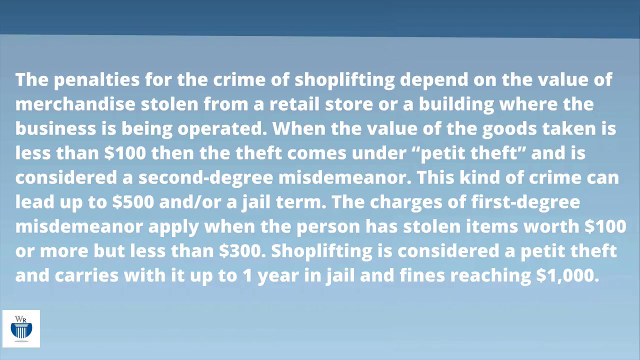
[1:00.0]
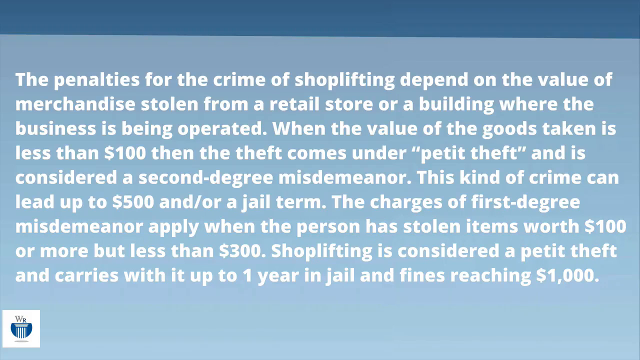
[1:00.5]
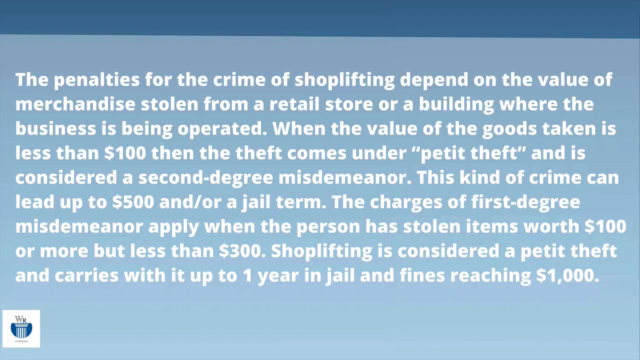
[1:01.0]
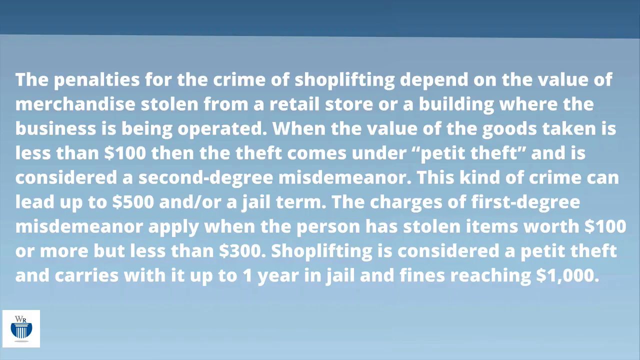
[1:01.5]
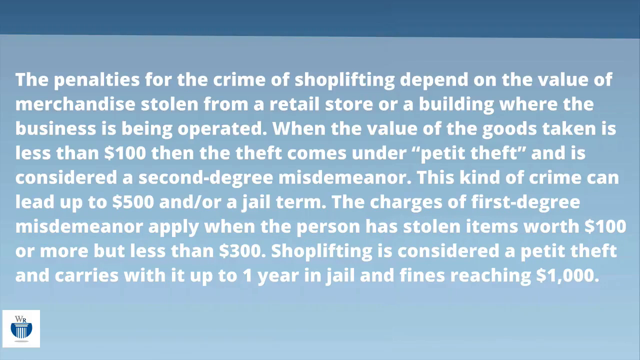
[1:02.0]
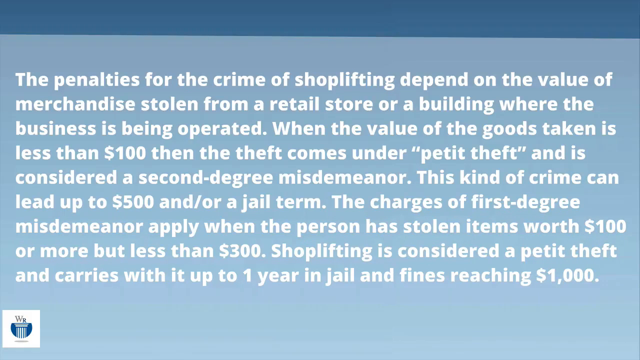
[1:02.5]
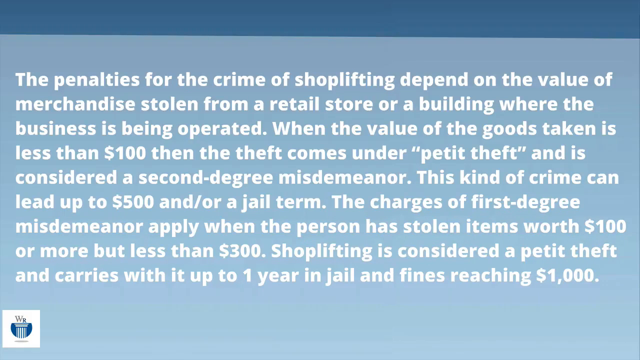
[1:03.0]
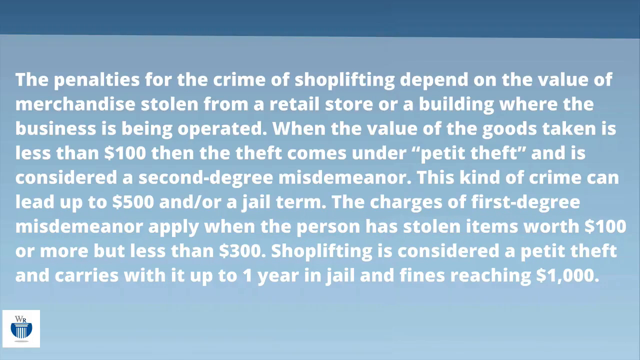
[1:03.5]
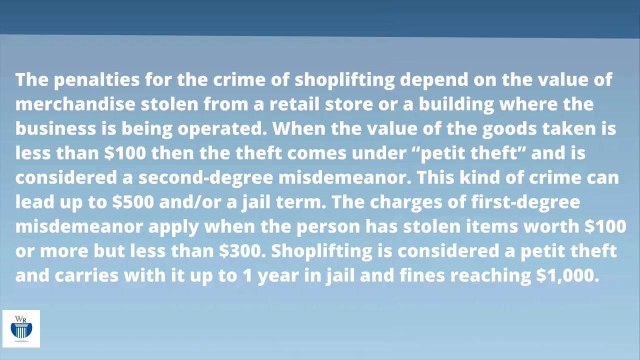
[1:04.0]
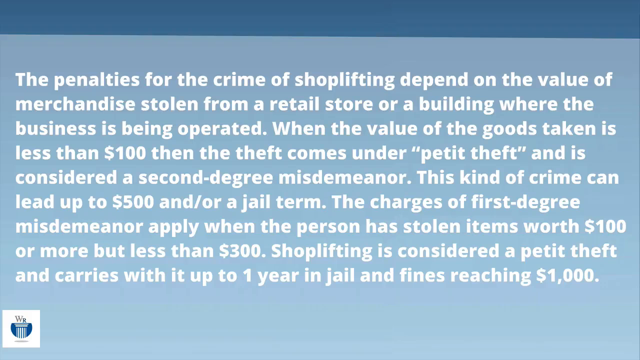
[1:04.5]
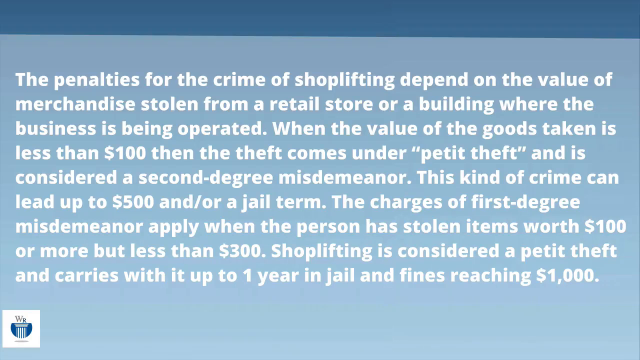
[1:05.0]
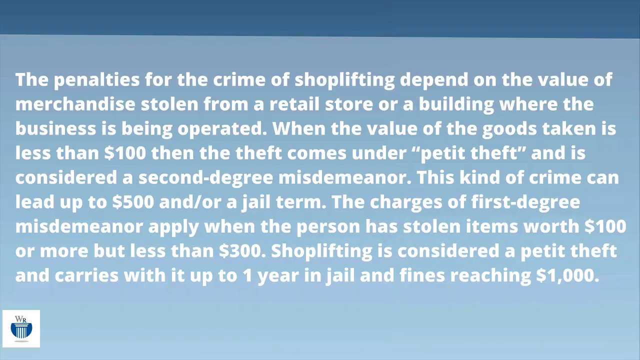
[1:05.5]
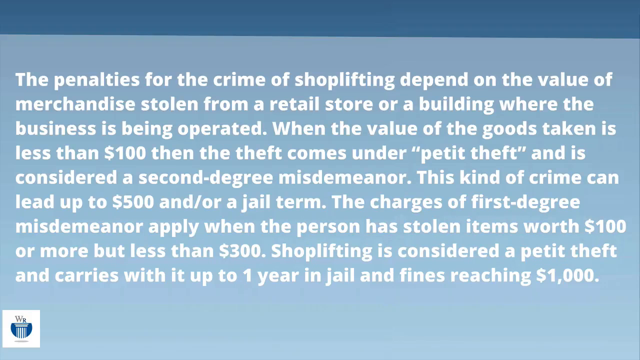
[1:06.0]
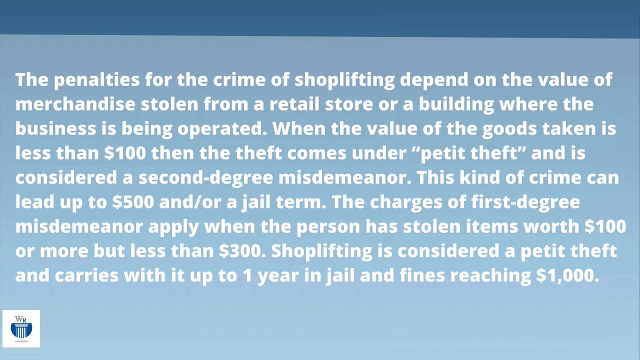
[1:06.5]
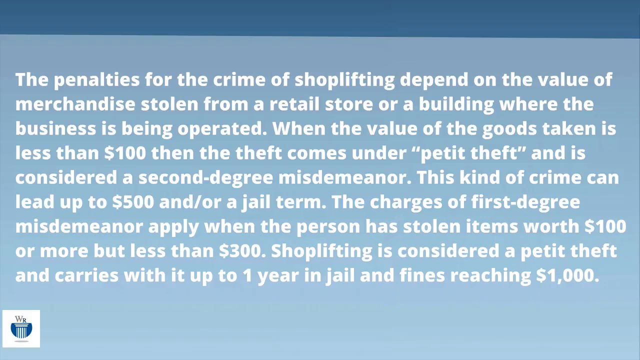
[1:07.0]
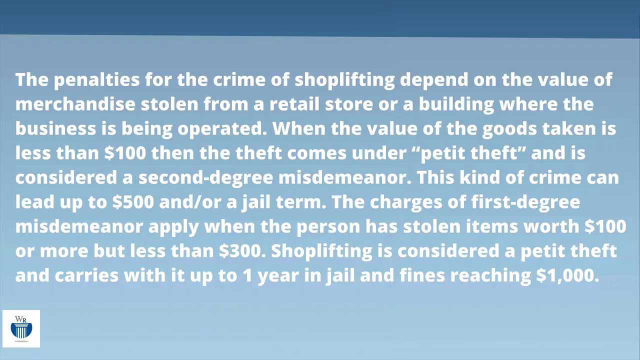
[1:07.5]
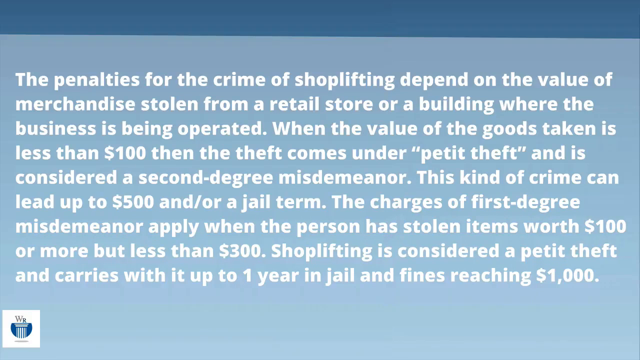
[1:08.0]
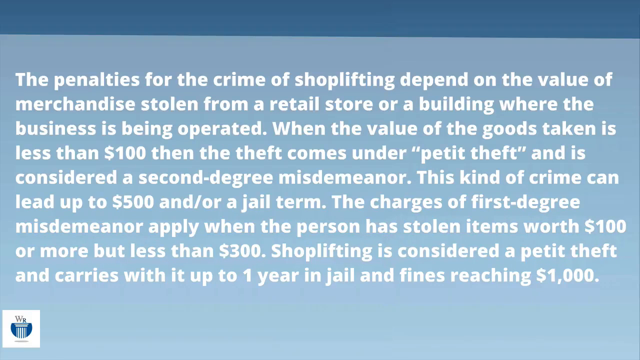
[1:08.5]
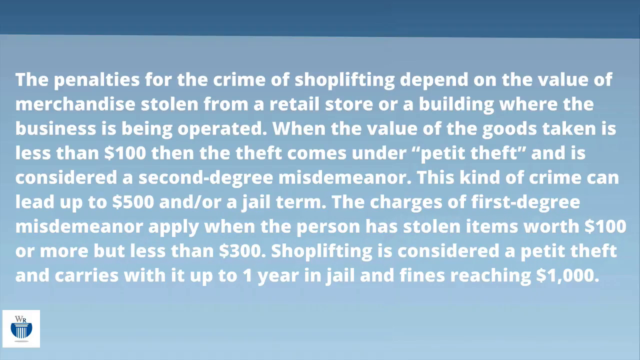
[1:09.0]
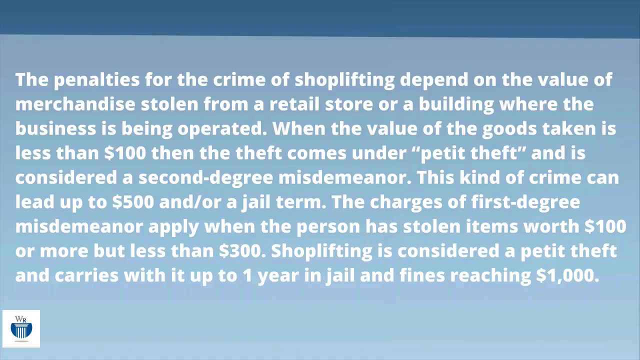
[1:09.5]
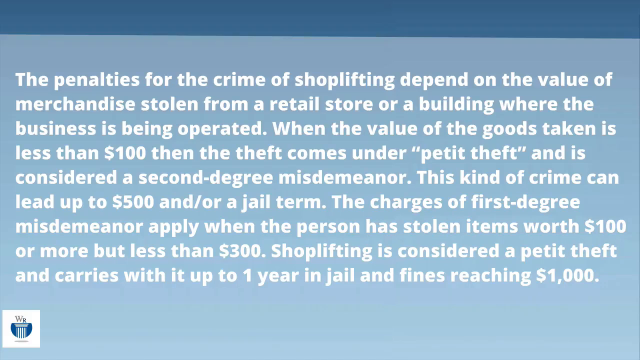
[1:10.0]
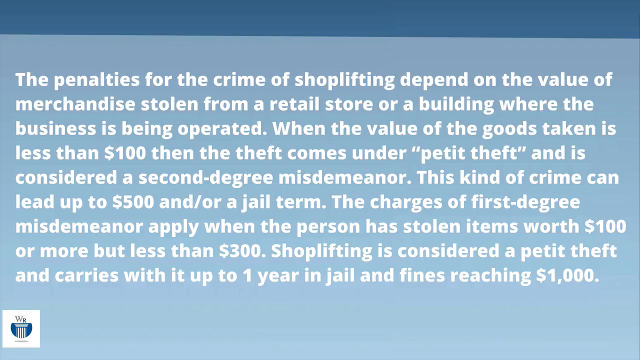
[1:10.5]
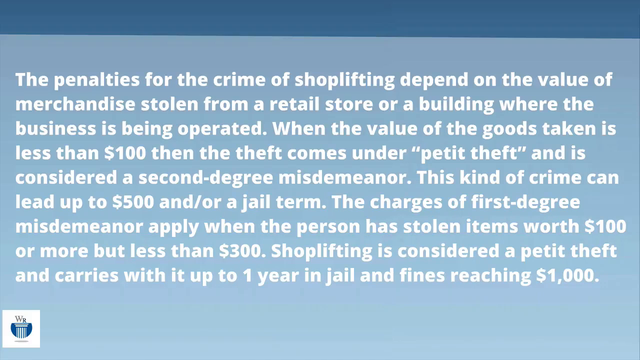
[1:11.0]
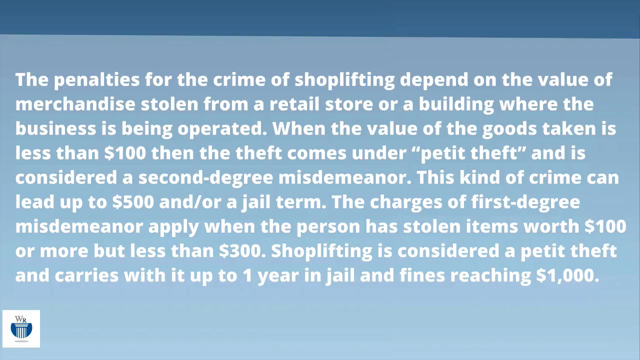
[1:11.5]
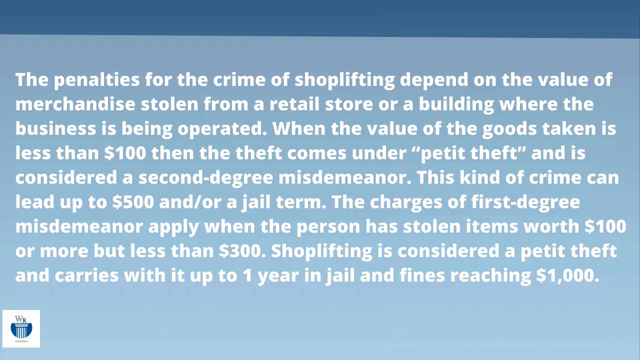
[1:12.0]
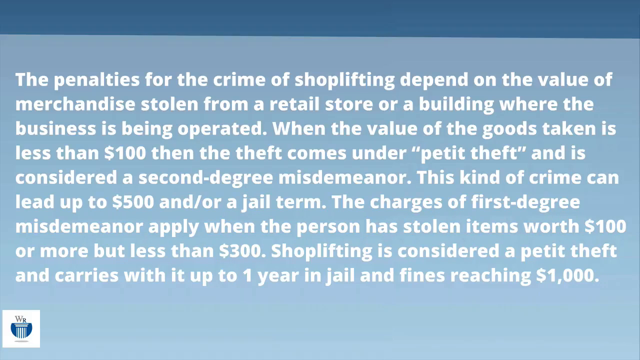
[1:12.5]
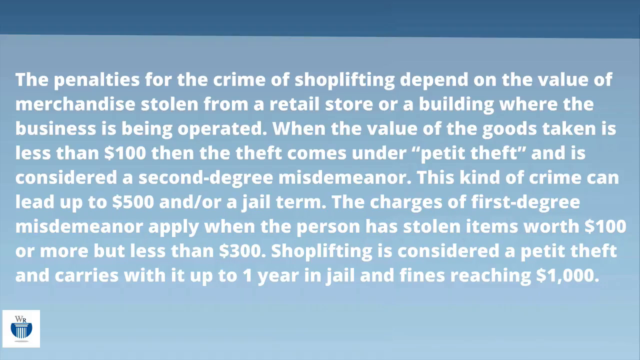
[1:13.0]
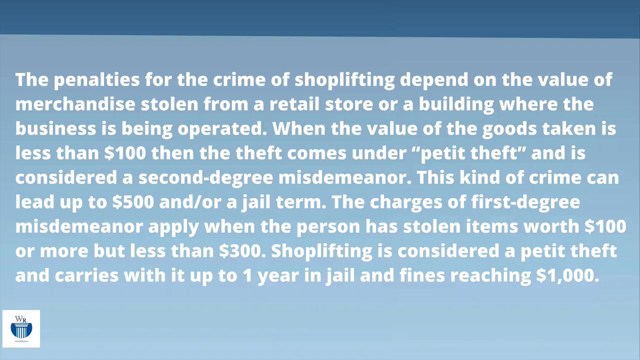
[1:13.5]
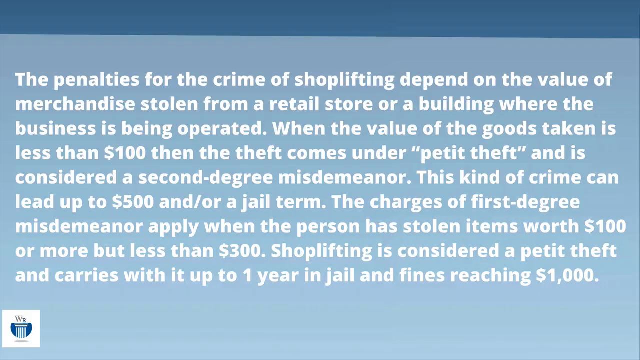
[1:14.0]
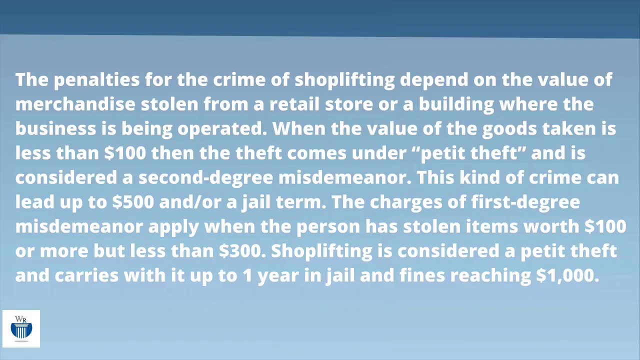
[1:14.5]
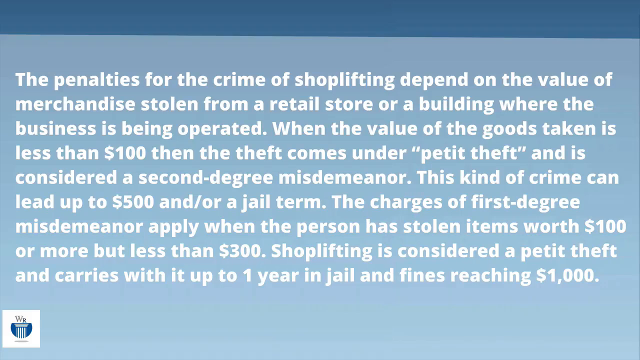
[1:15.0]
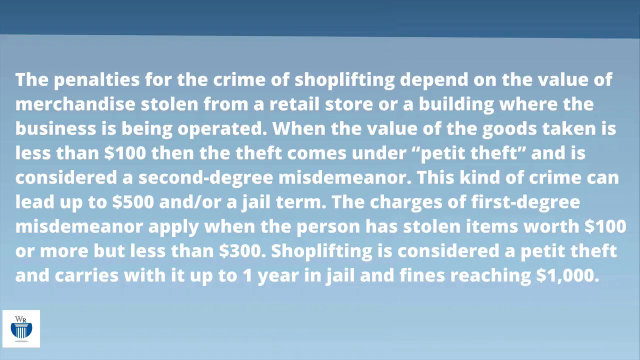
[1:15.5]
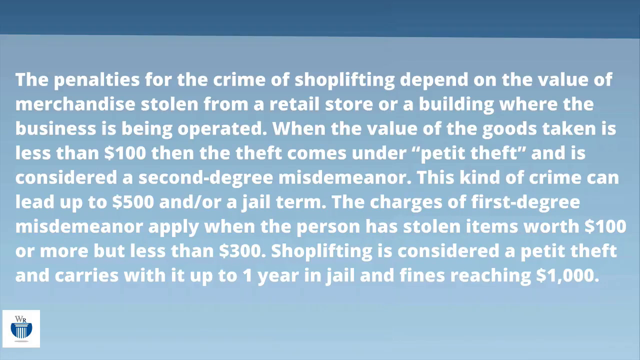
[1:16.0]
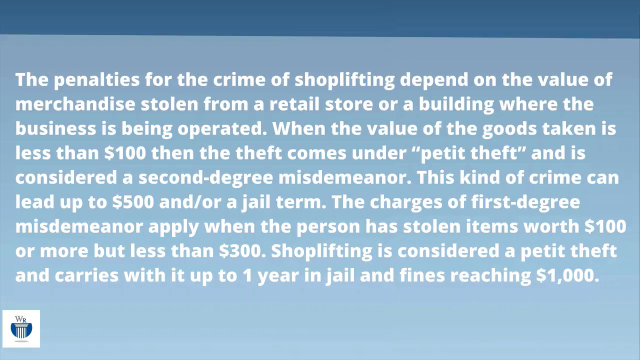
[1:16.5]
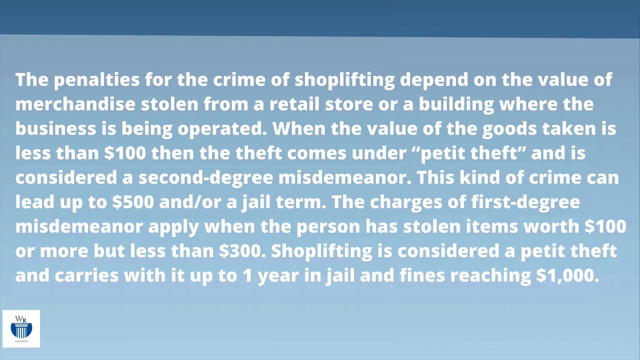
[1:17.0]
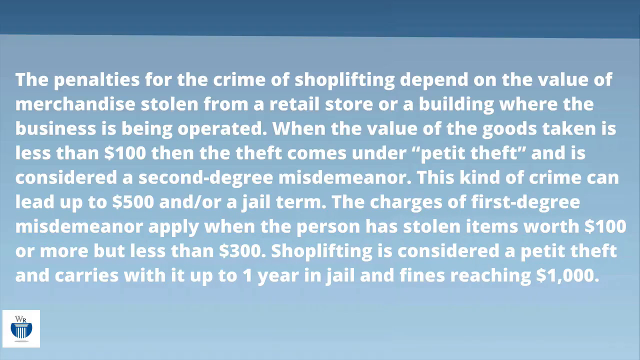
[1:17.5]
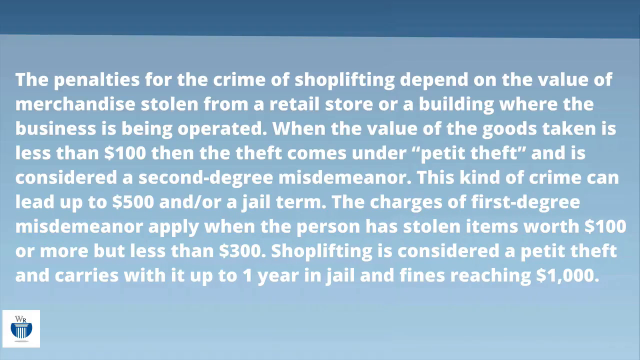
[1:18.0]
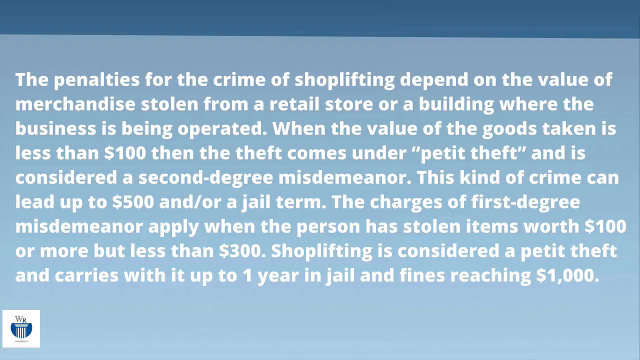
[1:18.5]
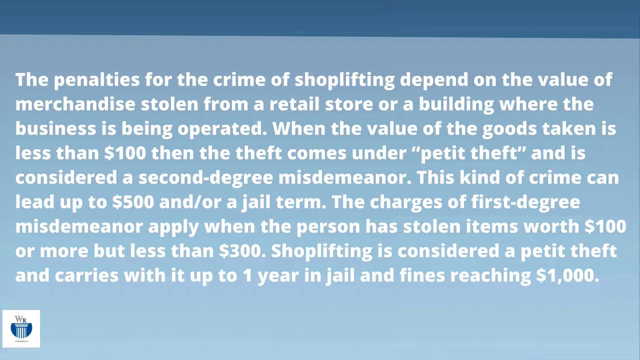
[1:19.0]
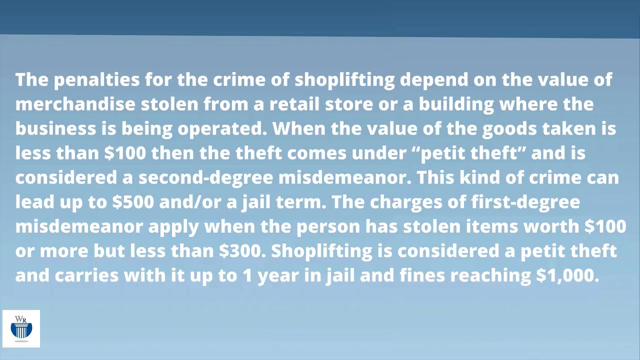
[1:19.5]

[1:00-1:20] A dark blue background holds a smaller light blue square with bold white lettering, which reads: "the penalties for the crime of shoplifting depend on the value of merchandise stolen from a retail store or a building where the business is being operated. When the value of the goods taken is less than $100, then the theft comes under petite theft and is considered a second degree misdemeanor. This kind of crime can lead up to $500 and or a jail term. Now the charges of first degree misdemeanor apply when the person has stolen items worth $100 or more, but less than $300. Shoplifting is then considered a petite theft and carries with it up to one year in jail and fines reaching $1,000."